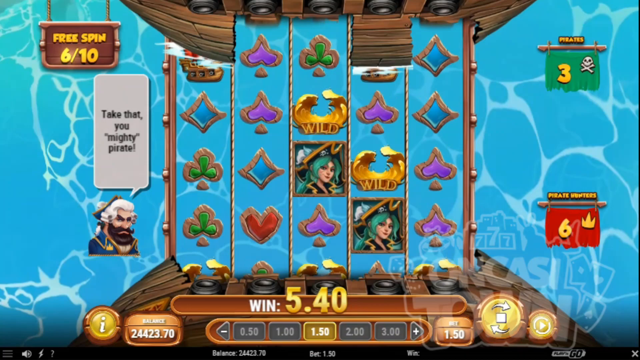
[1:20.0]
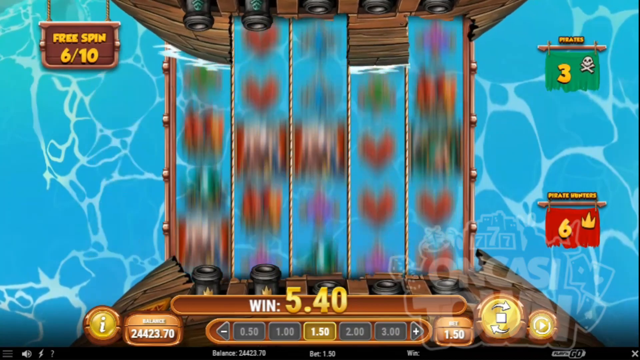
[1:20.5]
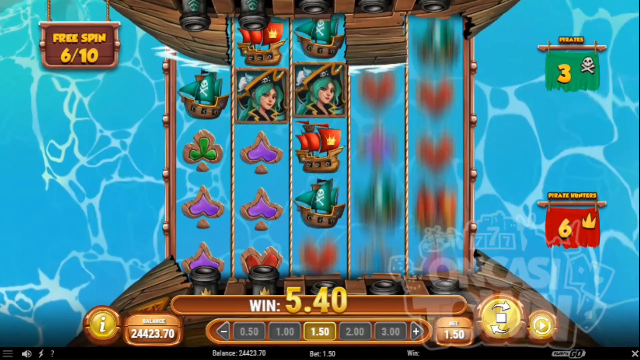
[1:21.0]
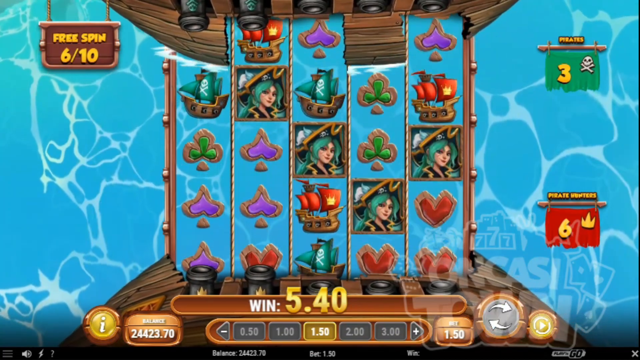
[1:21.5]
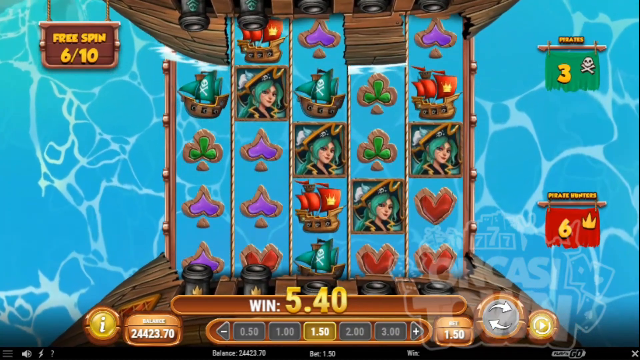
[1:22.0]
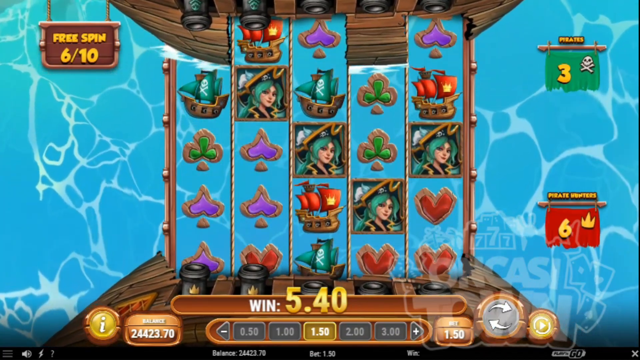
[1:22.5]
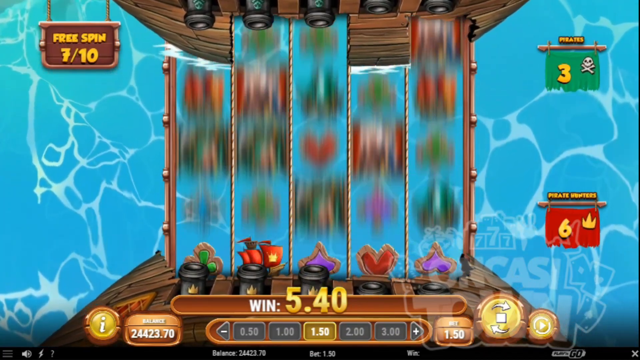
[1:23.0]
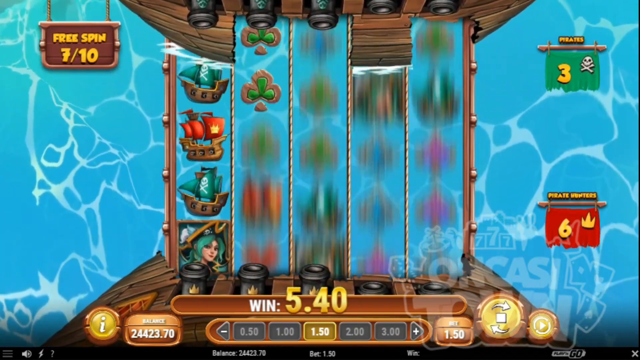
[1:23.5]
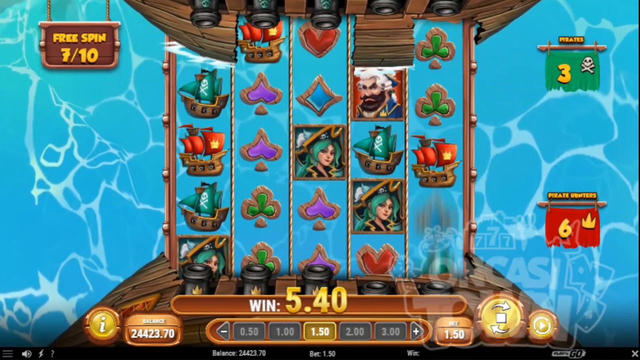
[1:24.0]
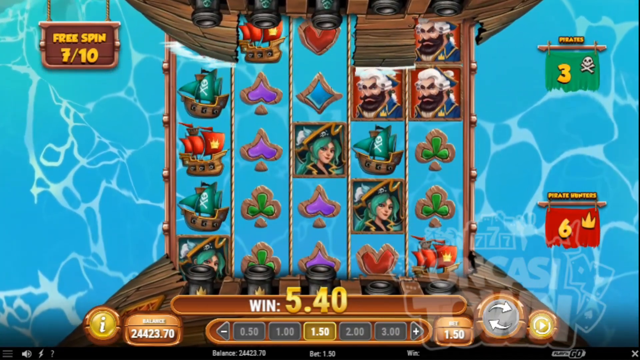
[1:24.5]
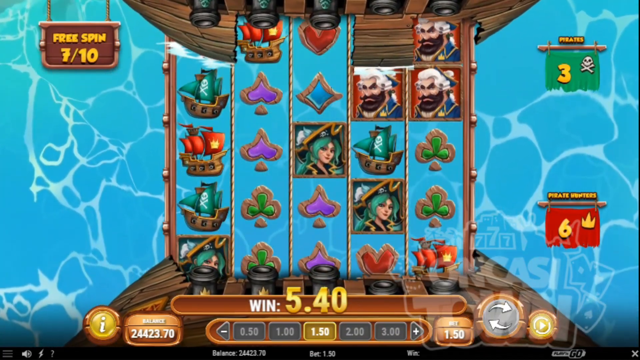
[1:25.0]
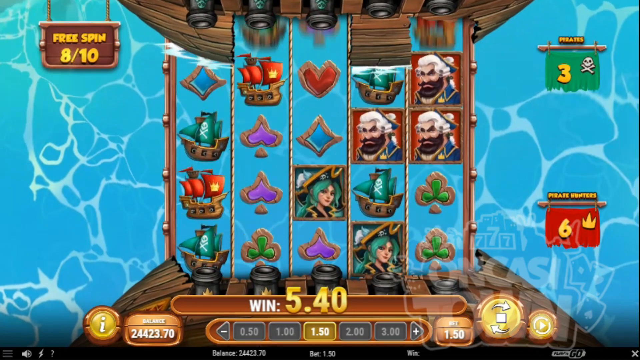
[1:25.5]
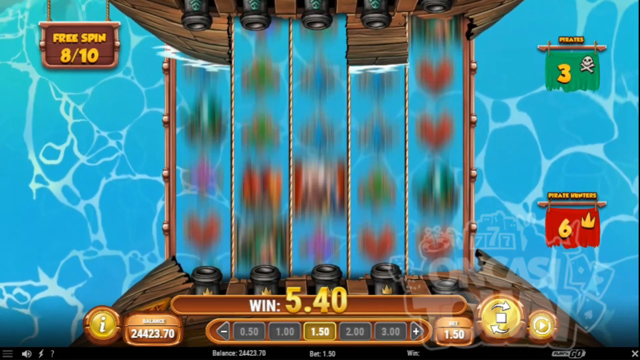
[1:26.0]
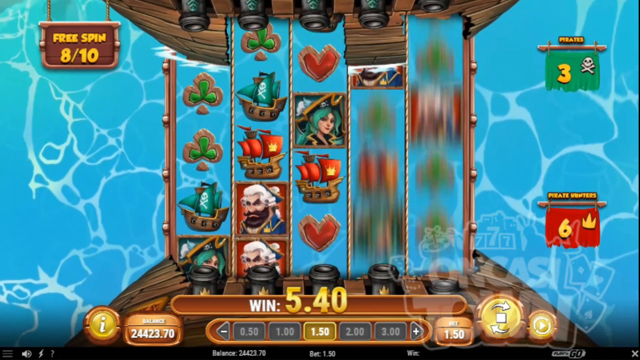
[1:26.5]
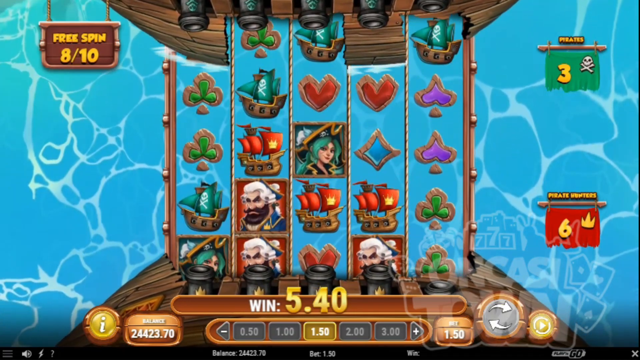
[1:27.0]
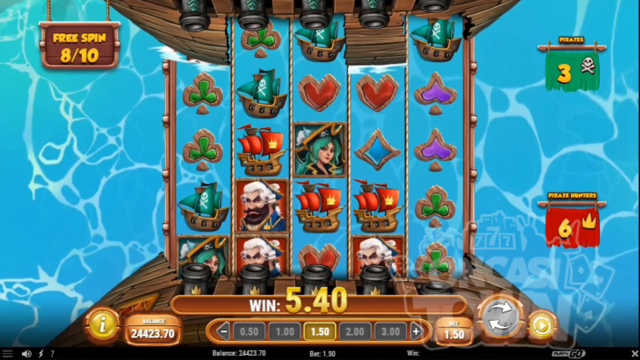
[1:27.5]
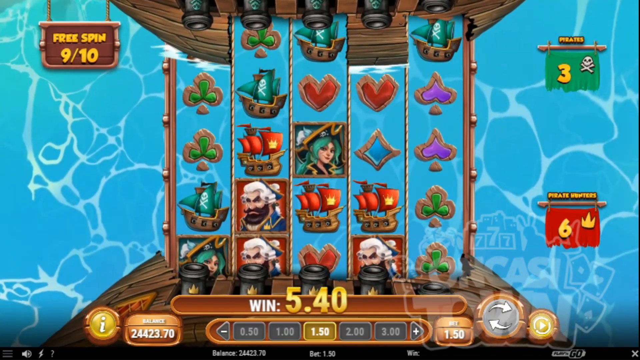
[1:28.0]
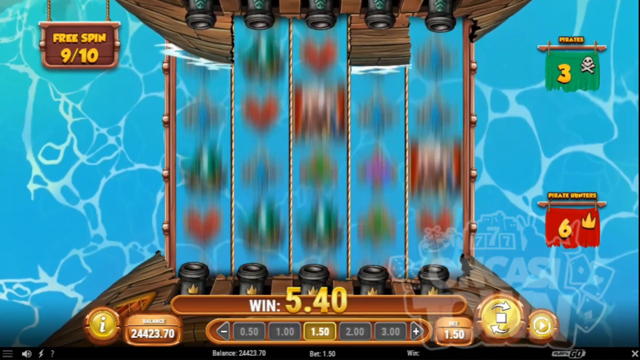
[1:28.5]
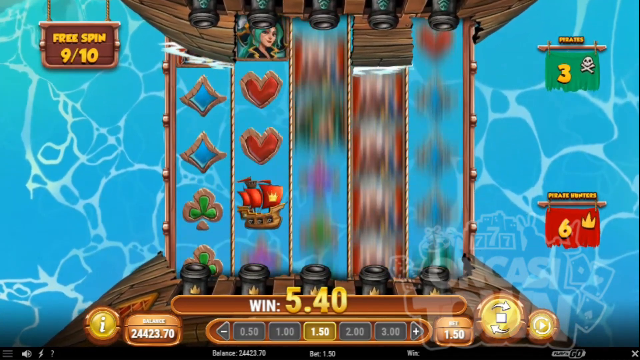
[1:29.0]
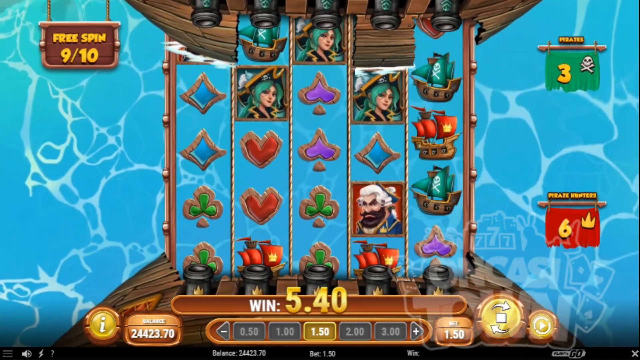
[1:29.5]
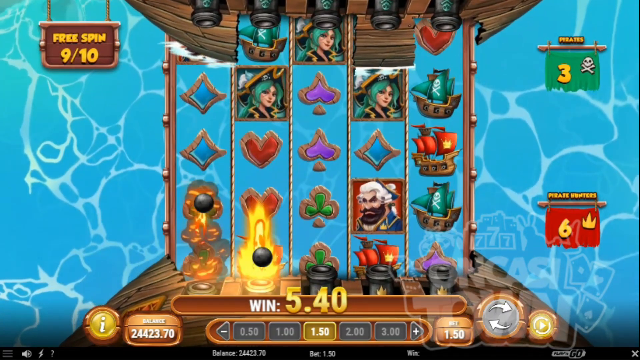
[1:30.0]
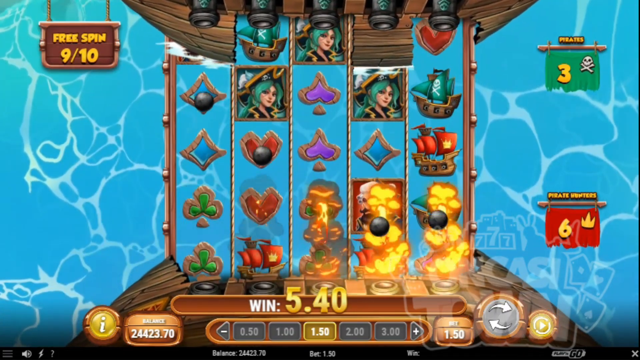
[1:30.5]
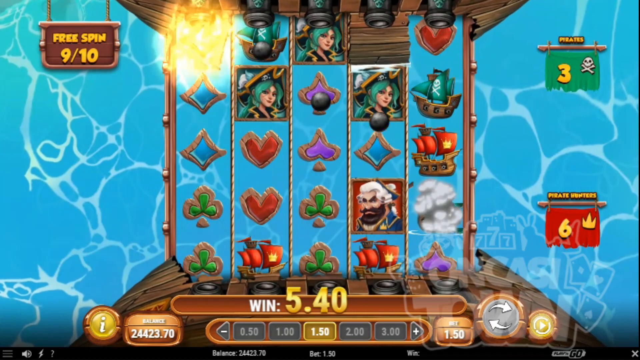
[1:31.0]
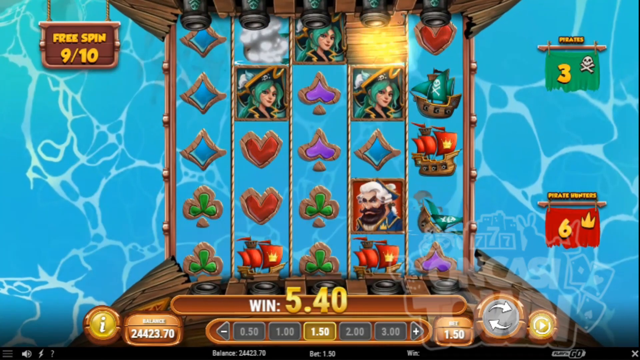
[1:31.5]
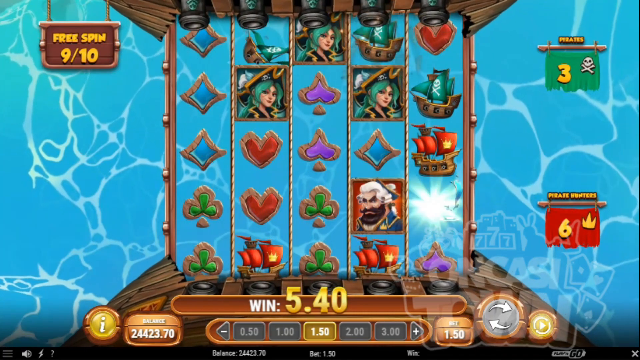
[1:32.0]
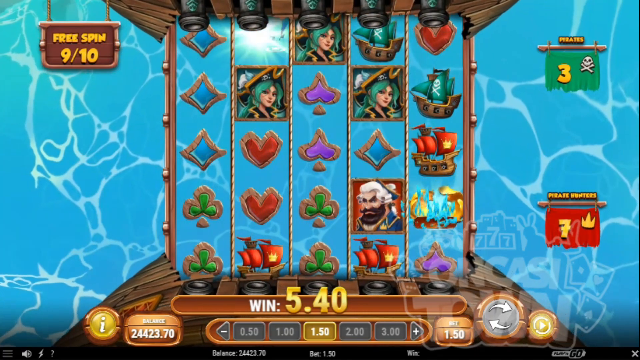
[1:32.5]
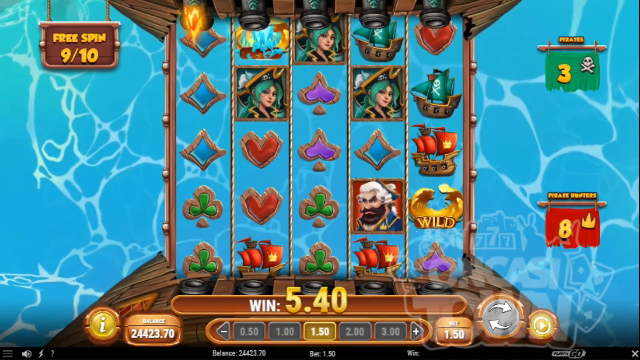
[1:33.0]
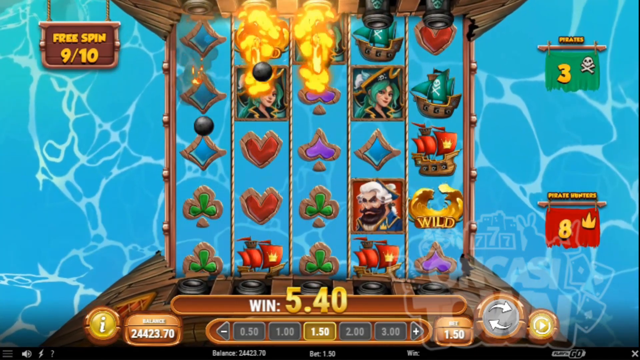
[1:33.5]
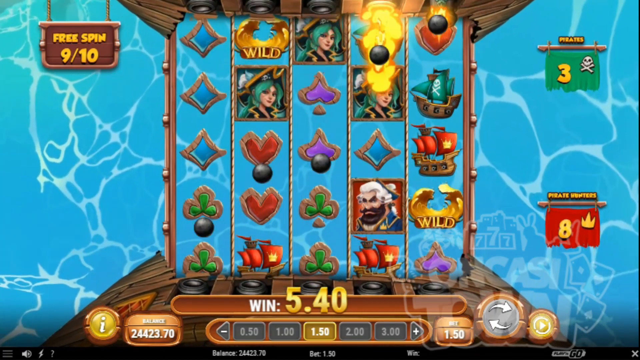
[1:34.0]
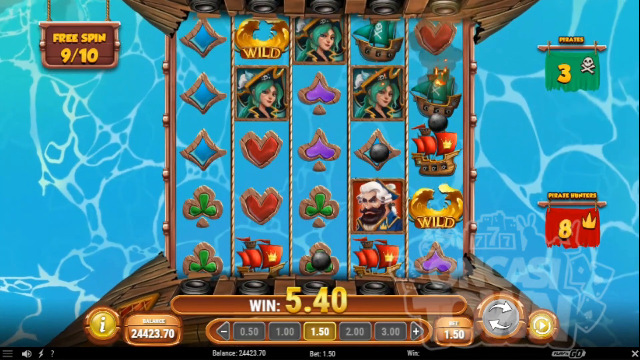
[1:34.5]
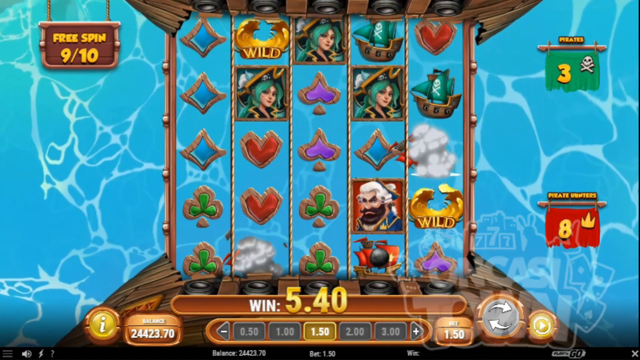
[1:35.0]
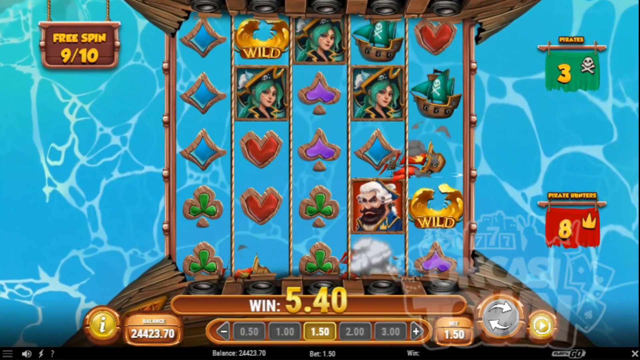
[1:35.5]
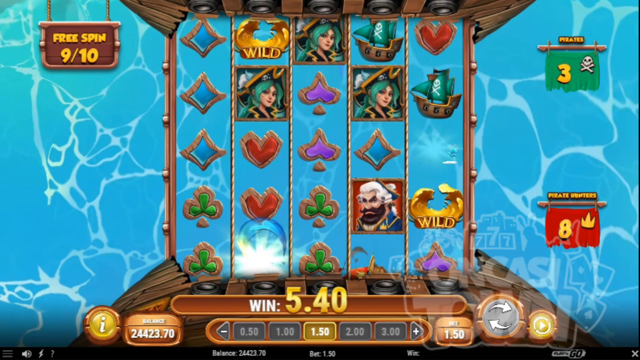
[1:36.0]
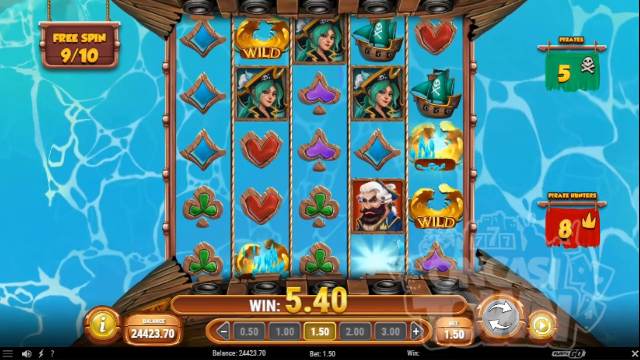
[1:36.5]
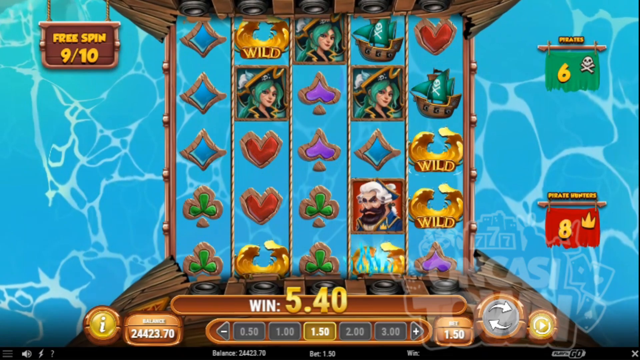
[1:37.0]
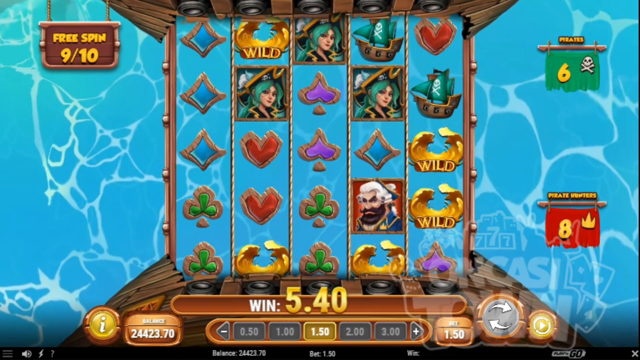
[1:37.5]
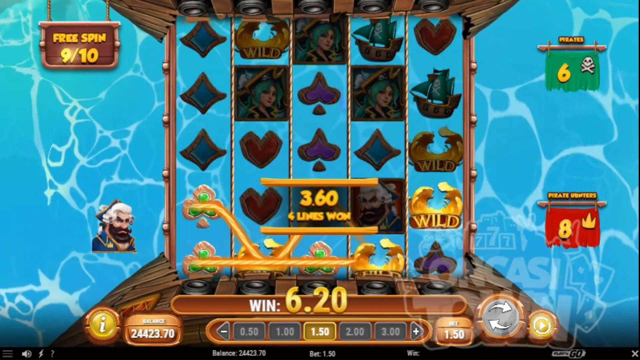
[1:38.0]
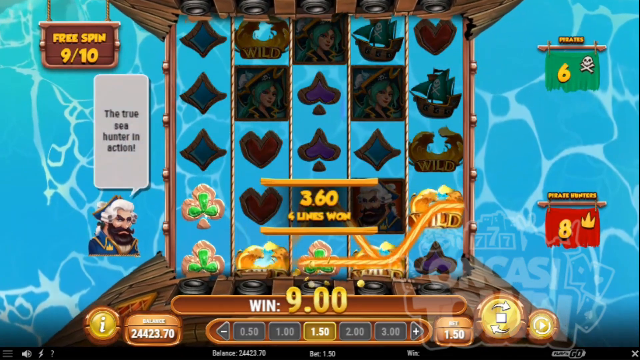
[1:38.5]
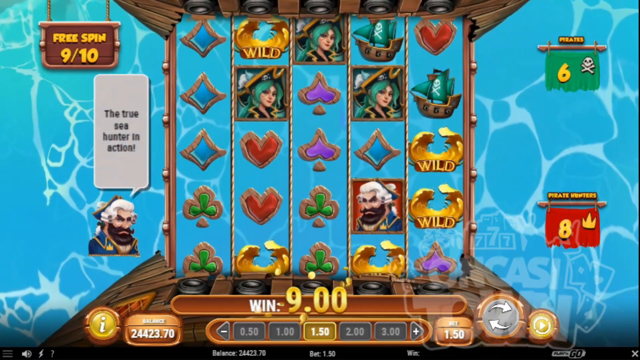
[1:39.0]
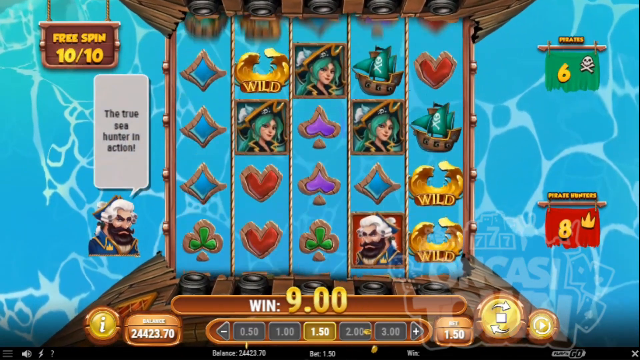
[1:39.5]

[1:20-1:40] Gameplay continues. The old pirate on the bottom left disappears, and the five columns slide around, with no high scores in the first few seconds. A graphic pops up in the top left-hand corner saying "free spin, 9 out of 10". Cannonballs fire up from the bottom ship towards the top ship, 4 or 5 of them, and 5 come back down, with the scores changing accordingly. The green panel in the top right-hand corner now says "6", and the red panel in the bottom right-hand corner says "8". The grumpy old pirate is back, saying "the true sea hunter in action". The scene is almost like an aerial view of a blue kind of sea texture, with the sides of a pirate ship at the top and at the bottom of the screen, as if seen from above; each has 5 cannon pointing towards the other ship. A graphic at the bottom of the screen says "Win", and just before the end it clicks over to "Win 9.0".